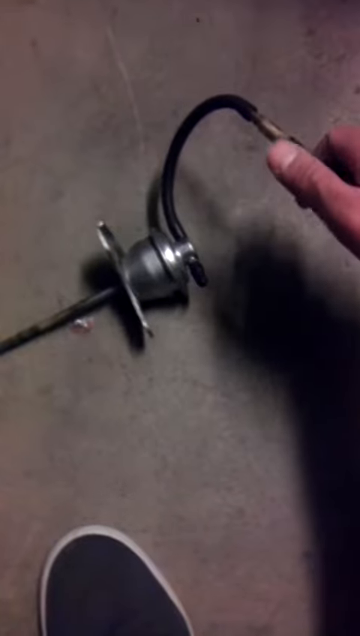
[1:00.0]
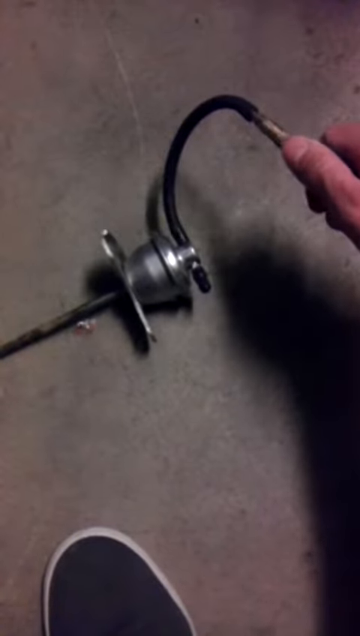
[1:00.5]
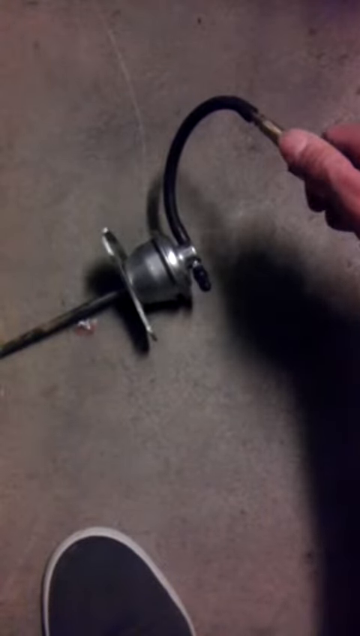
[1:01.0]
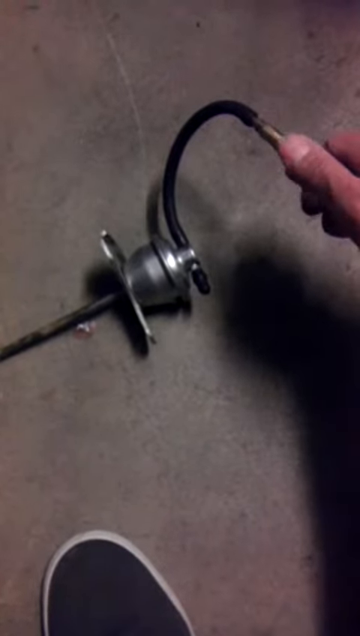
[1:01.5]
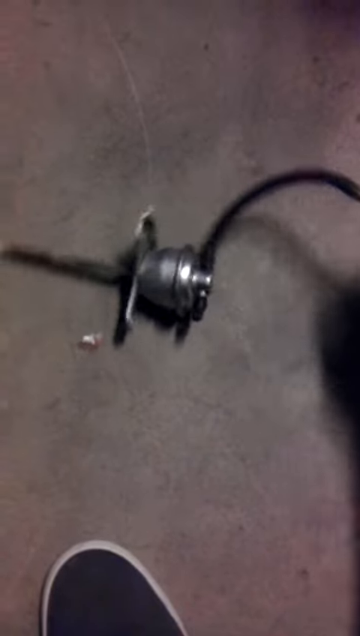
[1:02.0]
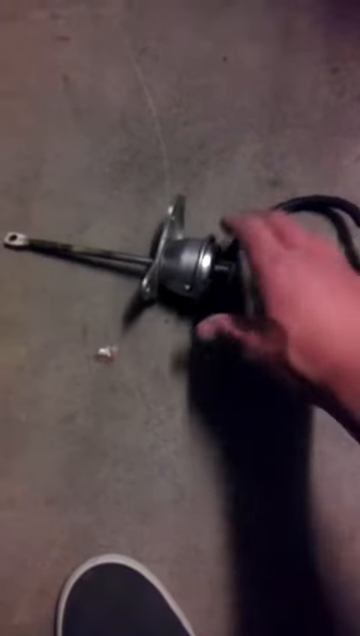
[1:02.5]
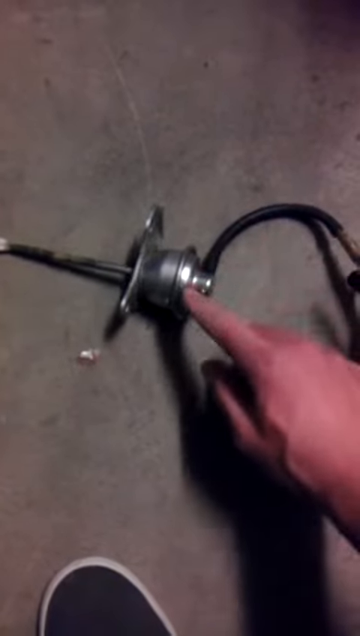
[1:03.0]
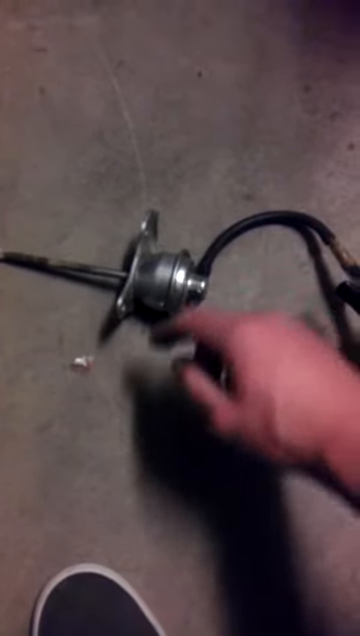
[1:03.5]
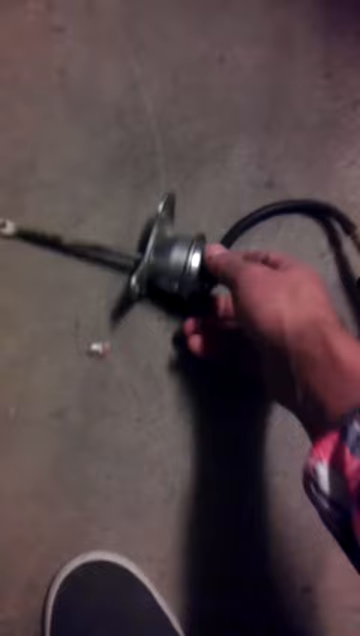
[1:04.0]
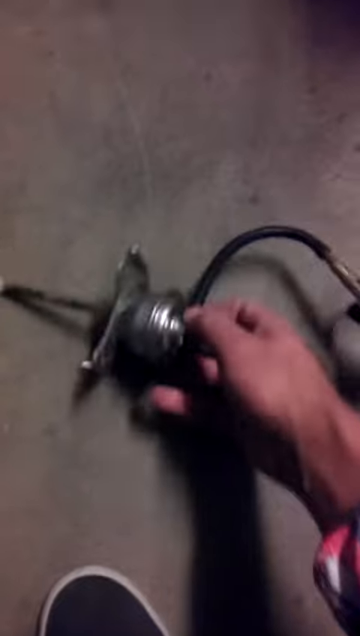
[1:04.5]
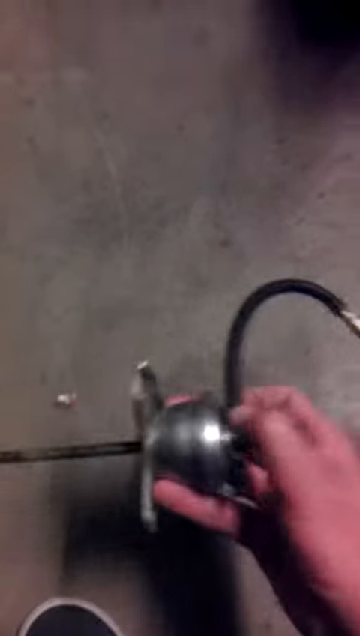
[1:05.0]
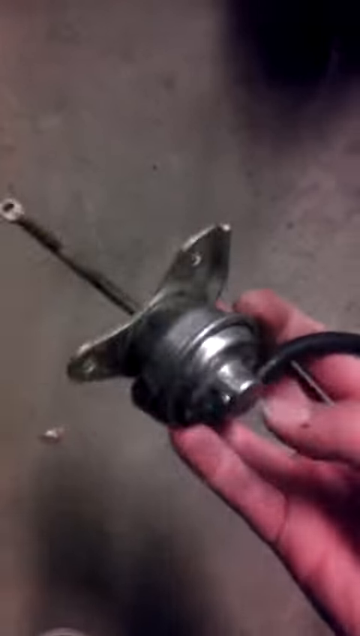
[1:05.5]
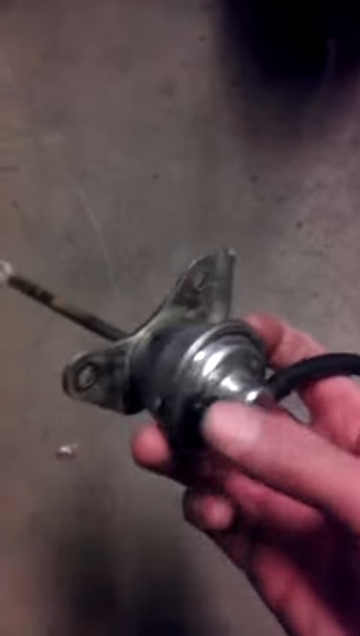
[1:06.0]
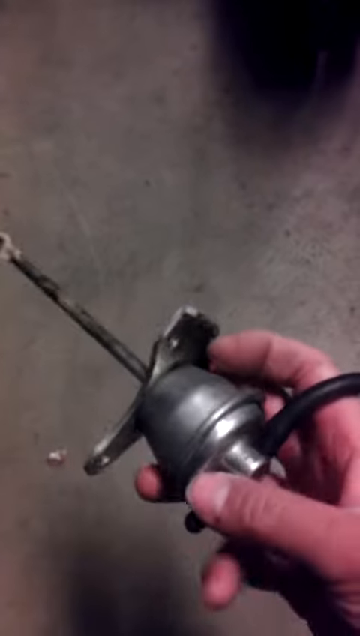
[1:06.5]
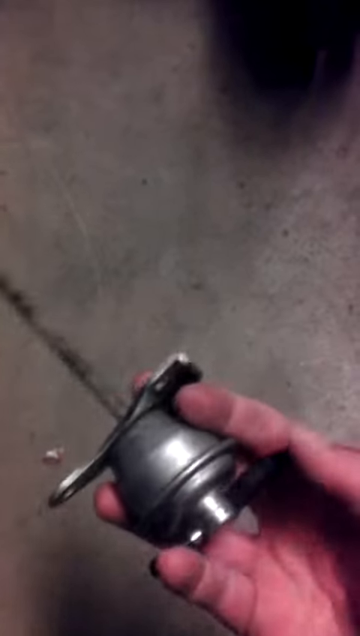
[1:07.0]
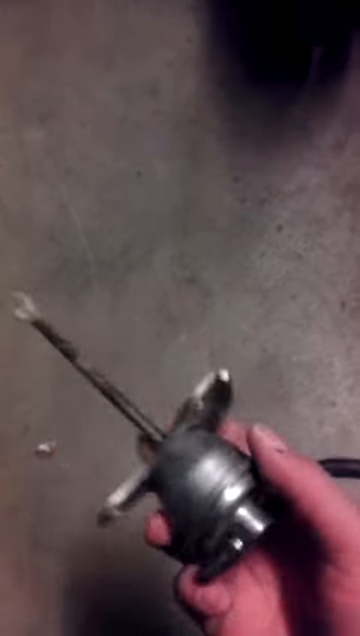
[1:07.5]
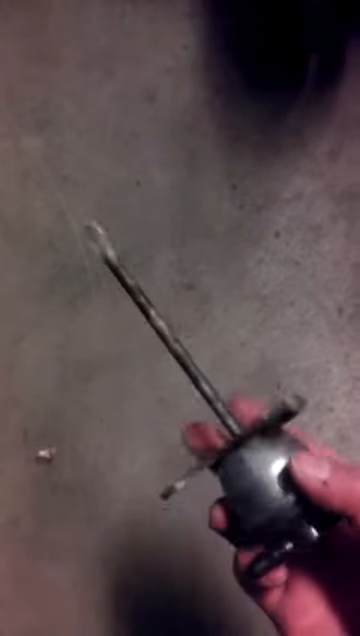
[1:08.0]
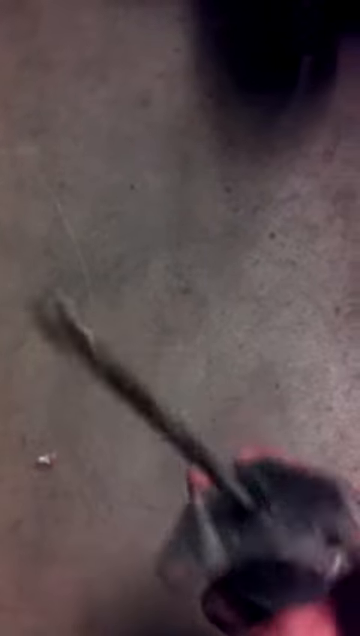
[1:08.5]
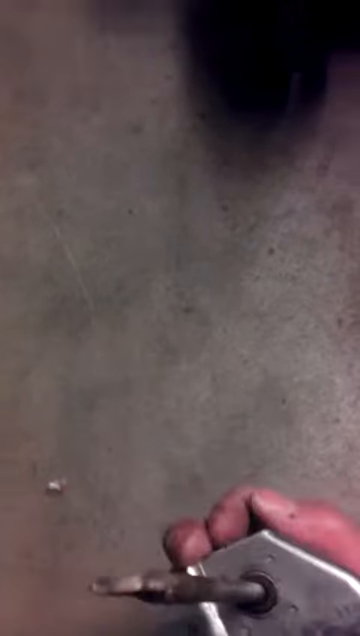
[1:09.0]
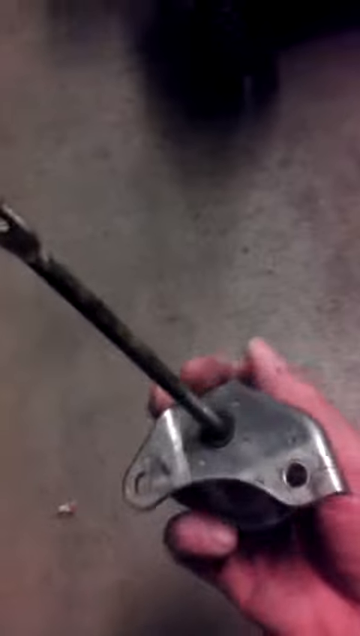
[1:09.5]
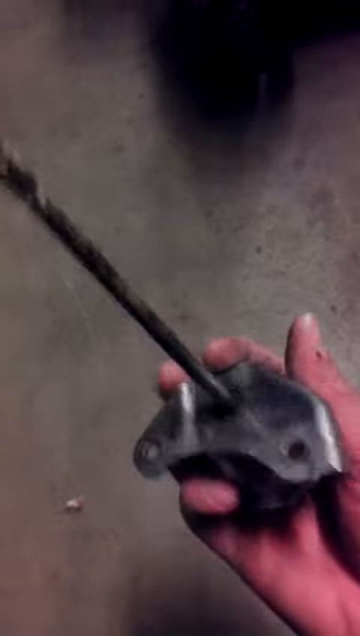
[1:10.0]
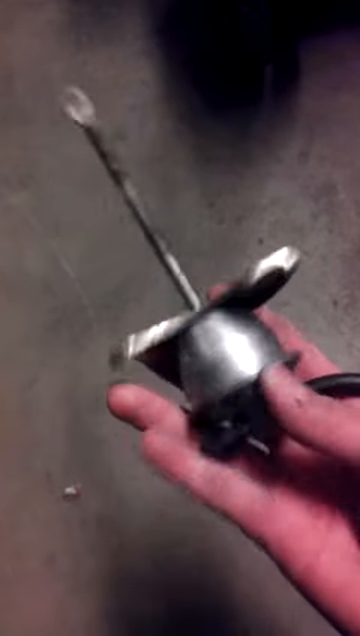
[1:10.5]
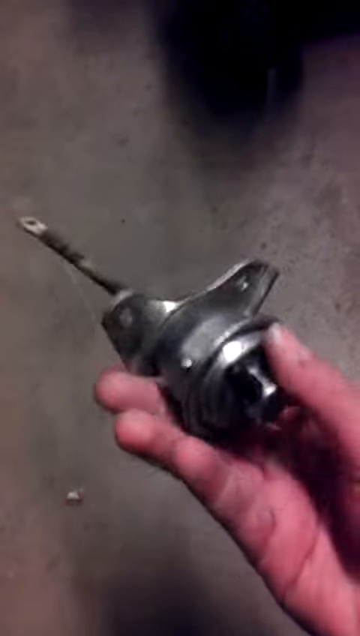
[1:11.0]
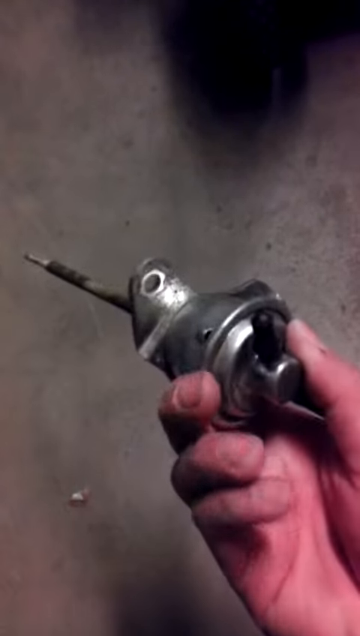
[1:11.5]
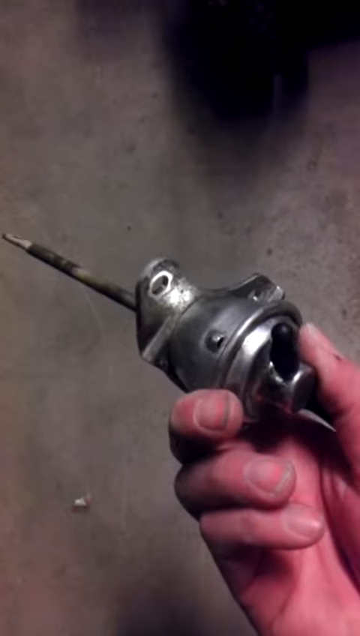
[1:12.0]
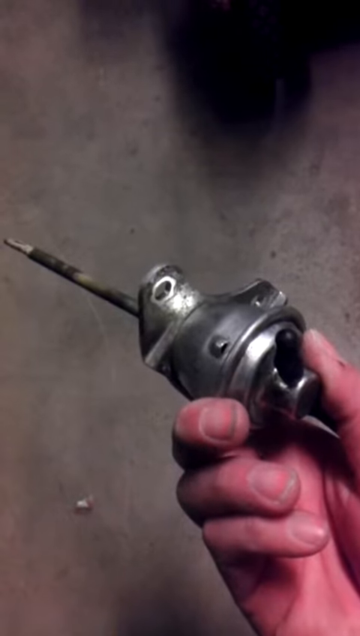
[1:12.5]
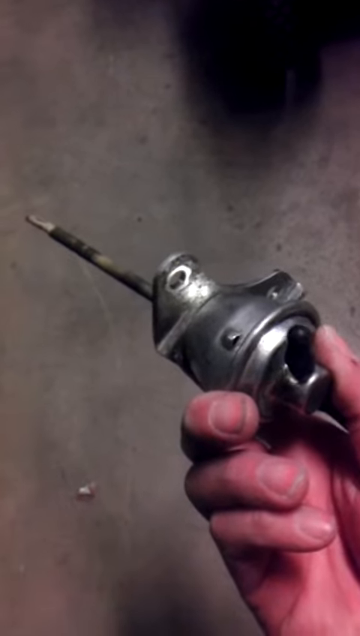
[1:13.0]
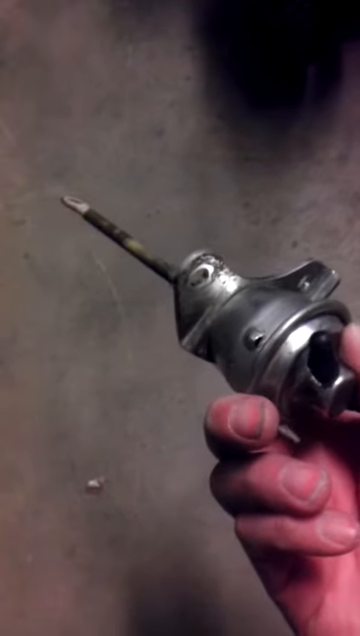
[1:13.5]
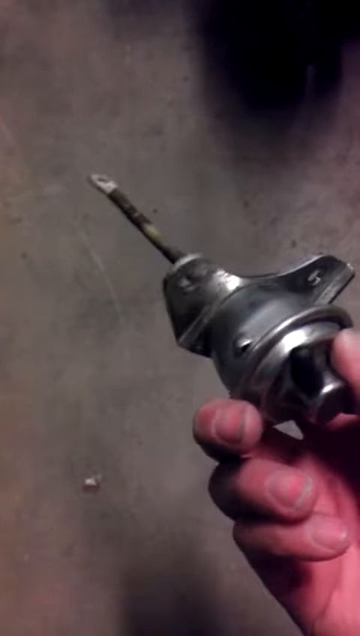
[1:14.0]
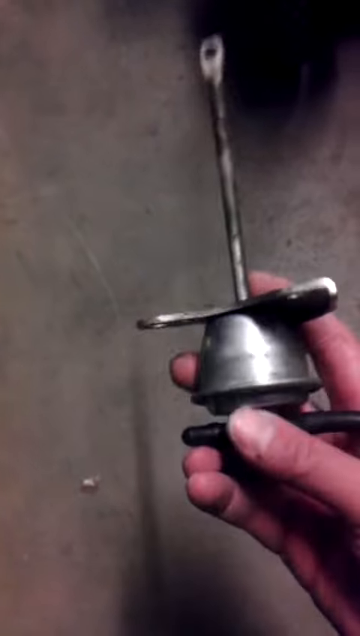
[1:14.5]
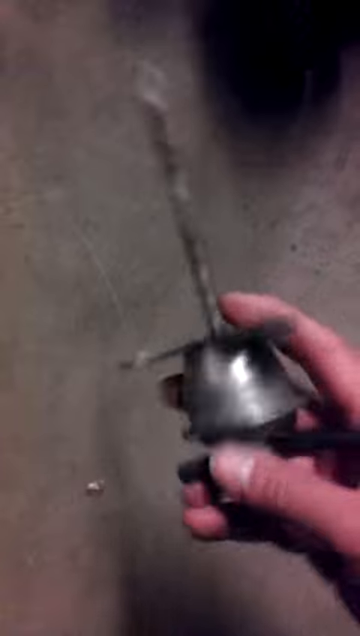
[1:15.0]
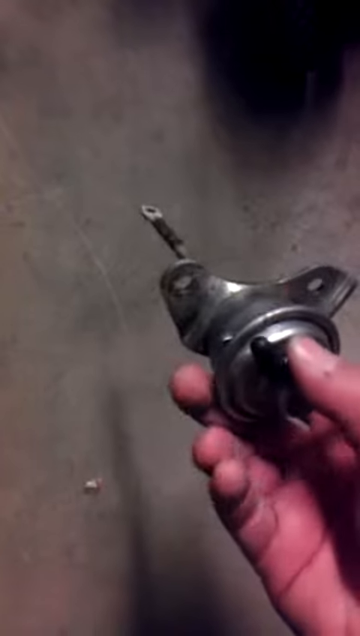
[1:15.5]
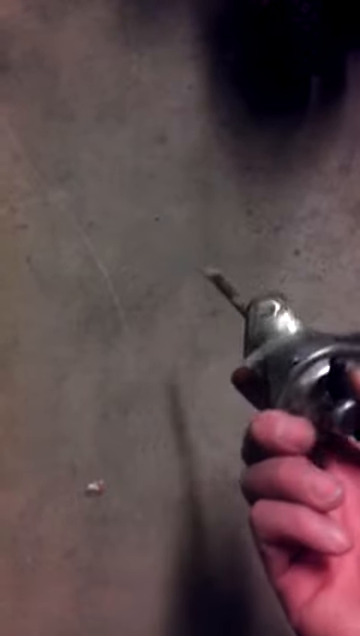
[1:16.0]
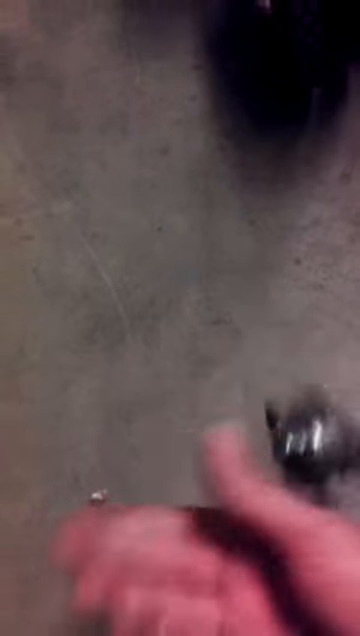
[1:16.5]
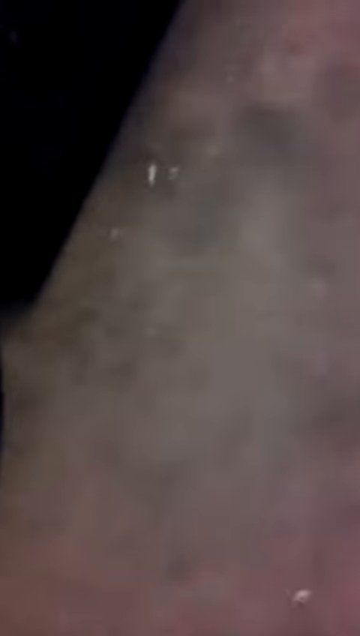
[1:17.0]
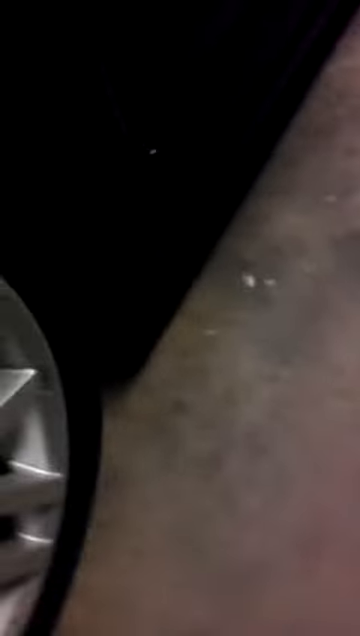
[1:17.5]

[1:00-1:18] He appears to be either tightening or loosening the black tube/cable that goes into the silver device. He holds it in his hand and moves it around, seemingly just showing it. He briefly points at the black tube and makes a swiping motion toward its metal part. The device looks somewhat like a doorknob with a screwdriver on the end. In some parts he sets the metal contraption down on the floor, and in others he holds it and moves it around to show different angles. Because the recording is so shaky, the rim of a car's tire is briefly visible at the end. At the end, he appears to toss it down on the floor, not very gently.